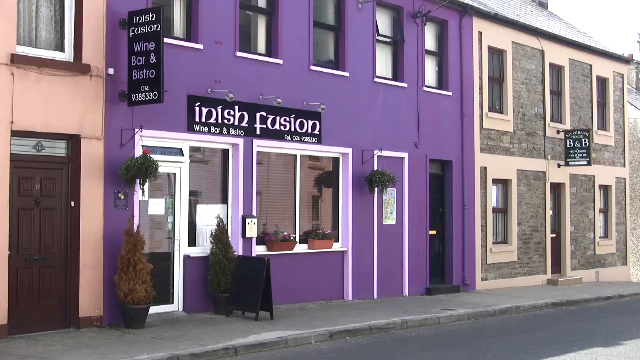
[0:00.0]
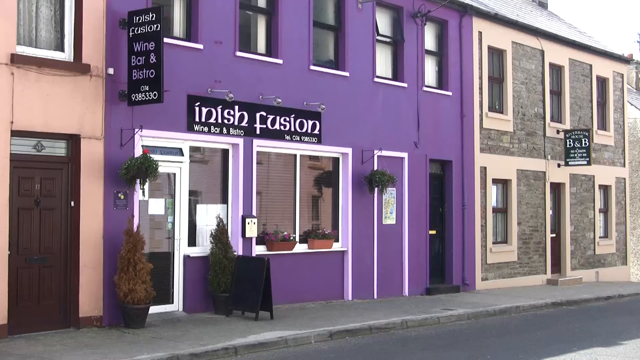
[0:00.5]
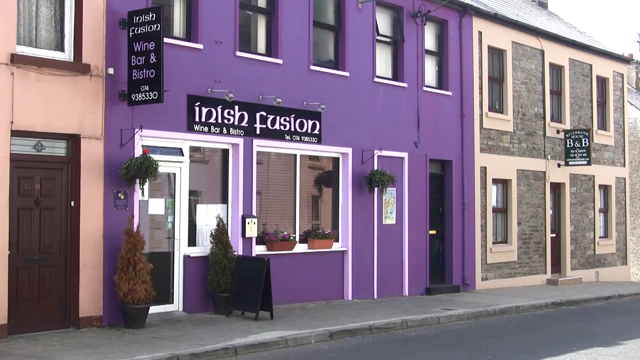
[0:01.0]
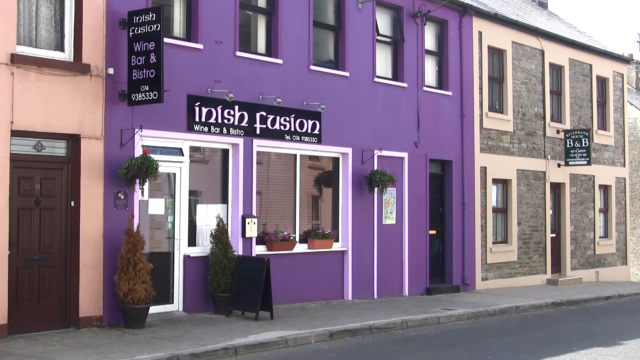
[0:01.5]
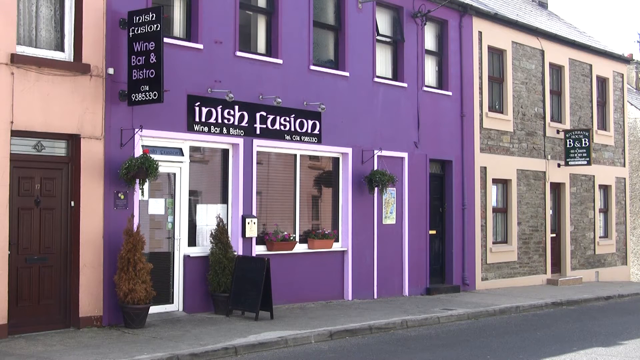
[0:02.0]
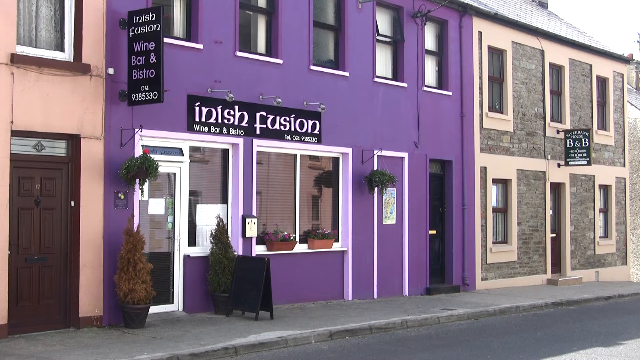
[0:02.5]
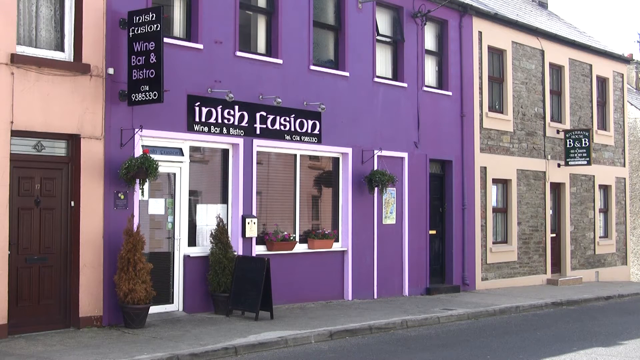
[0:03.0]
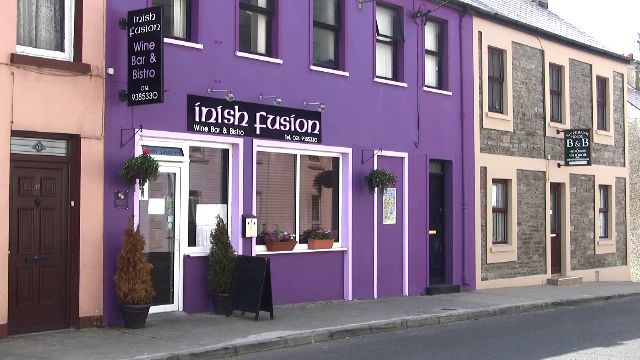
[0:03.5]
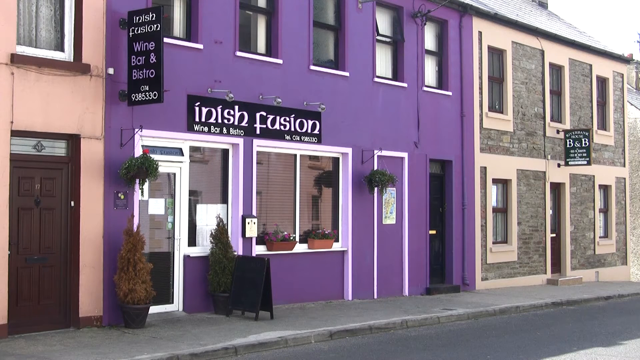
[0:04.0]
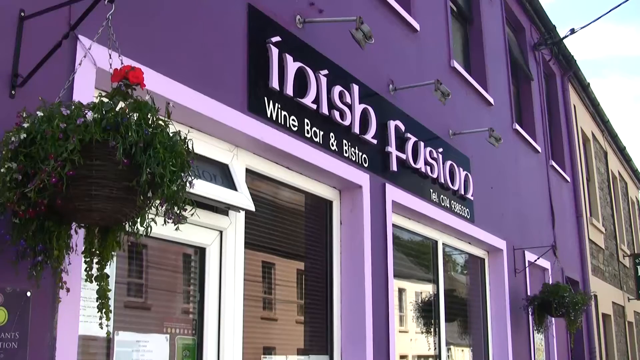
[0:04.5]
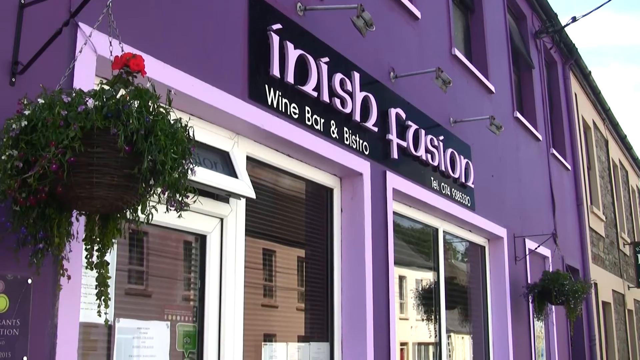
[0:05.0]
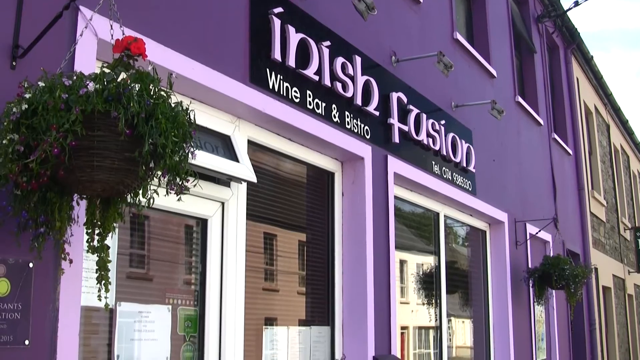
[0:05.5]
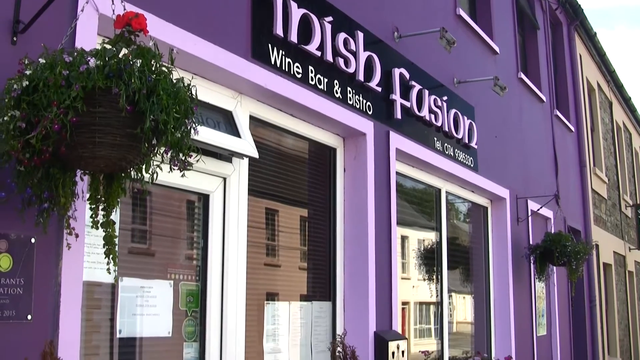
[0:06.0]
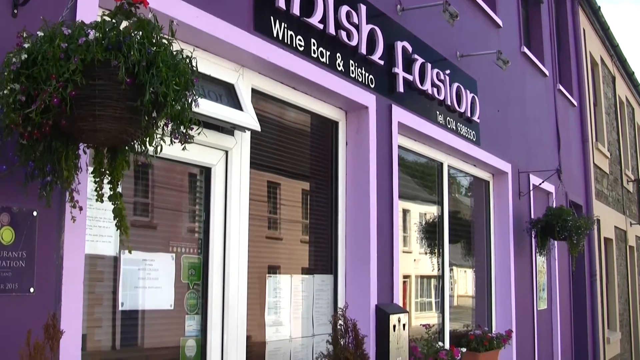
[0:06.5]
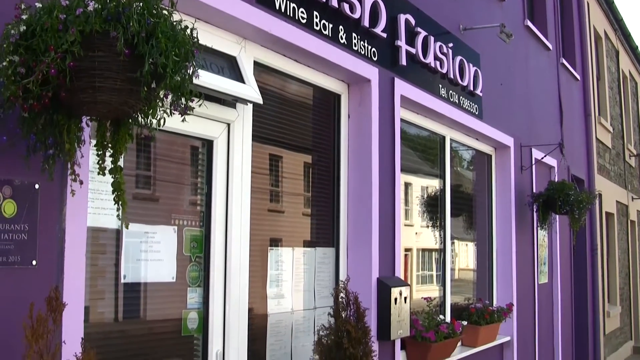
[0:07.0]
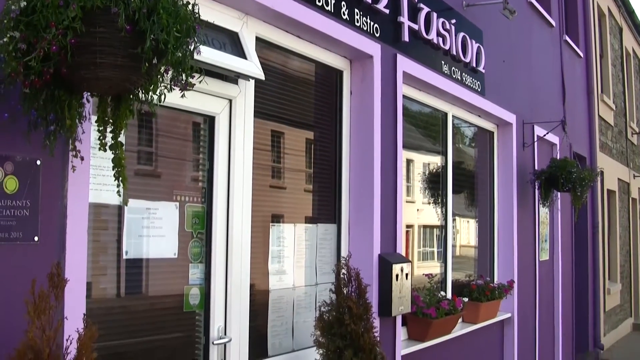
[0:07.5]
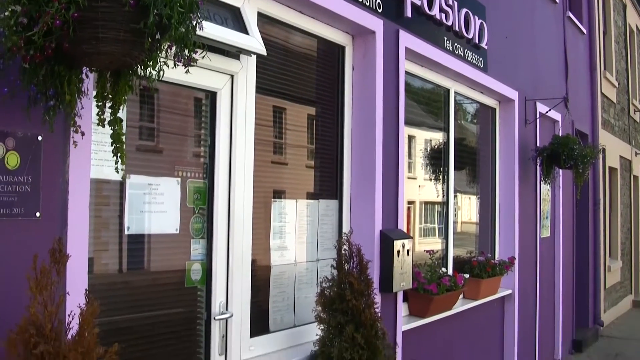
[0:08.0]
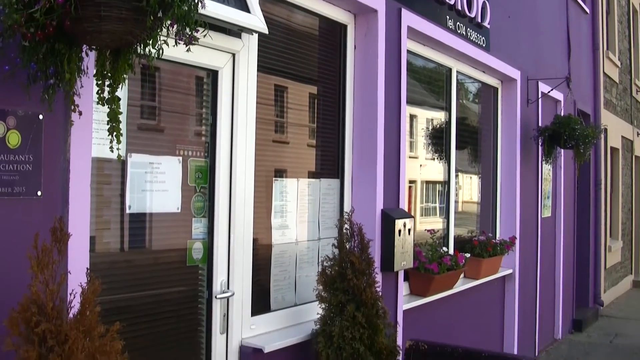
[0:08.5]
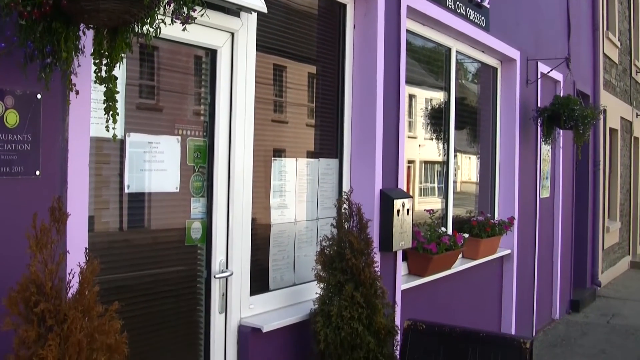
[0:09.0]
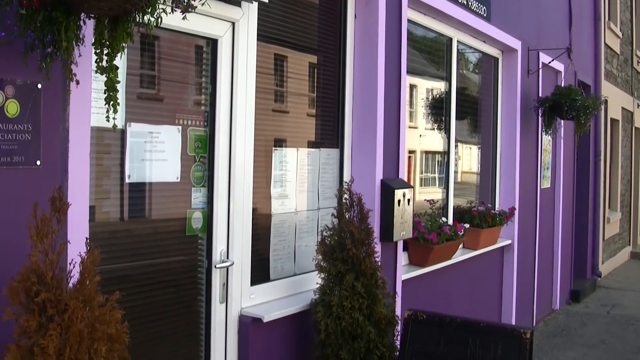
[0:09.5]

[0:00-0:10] A street scene shows part of a pink building on the left, a purple building in the center as the main focus, and a grey building on the right. The purple building has a sign that says "Irish Fusion." The video cuts in on a title that says "Wine Barn Bistro" and slowly pans down. The building is a restaurant with a front door and windows with white trim, and there are flower boxes underneath the windows. All of the buildings on the street are attached, in a downtown style.